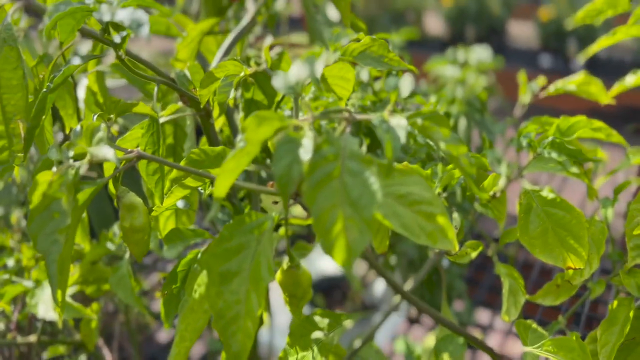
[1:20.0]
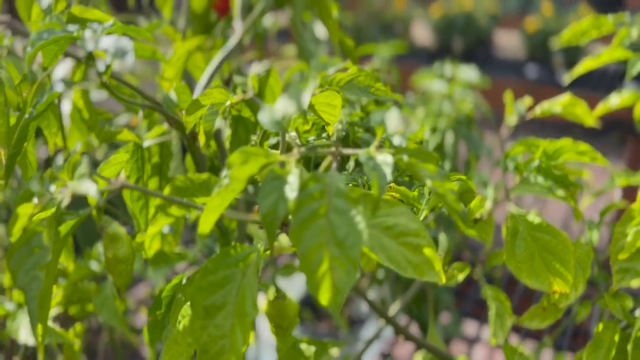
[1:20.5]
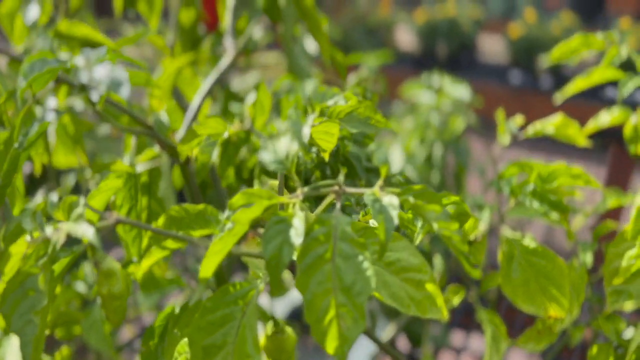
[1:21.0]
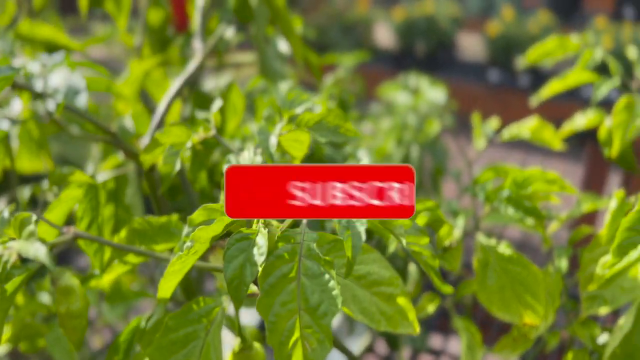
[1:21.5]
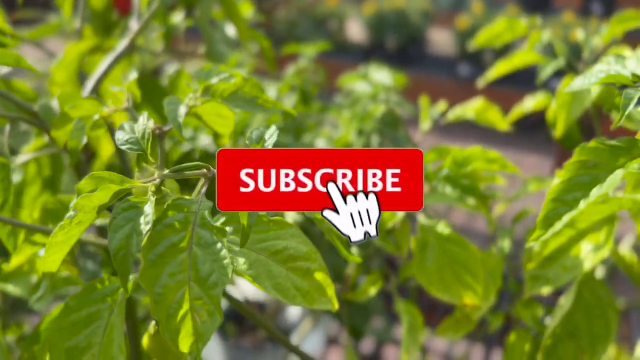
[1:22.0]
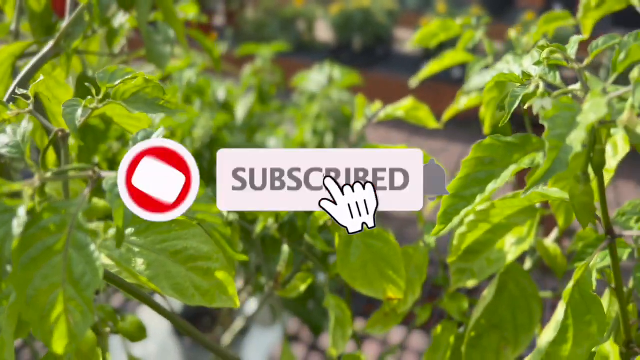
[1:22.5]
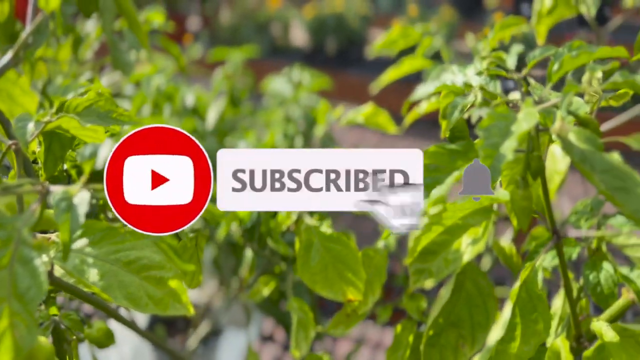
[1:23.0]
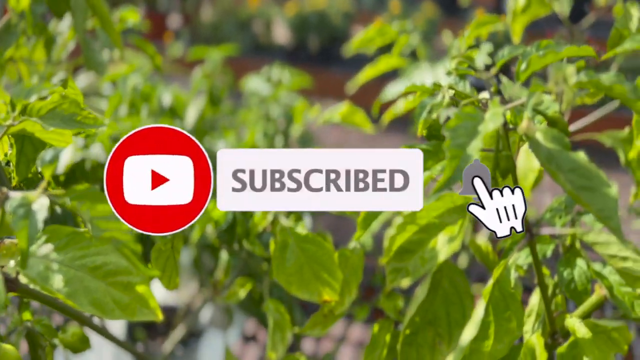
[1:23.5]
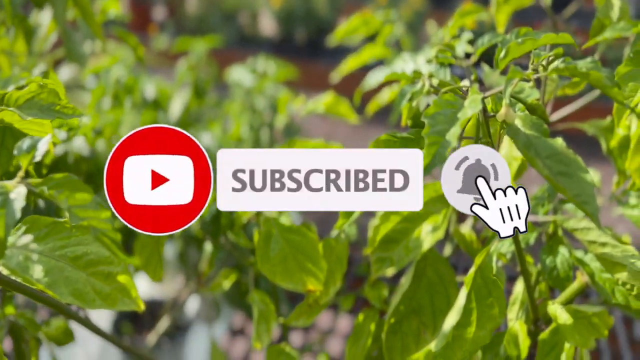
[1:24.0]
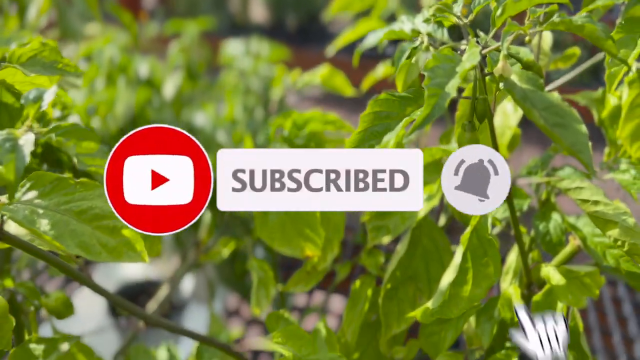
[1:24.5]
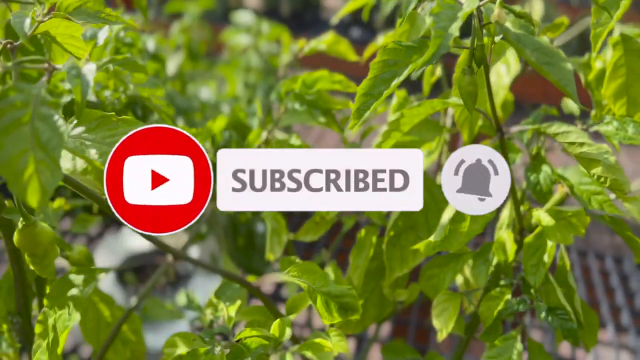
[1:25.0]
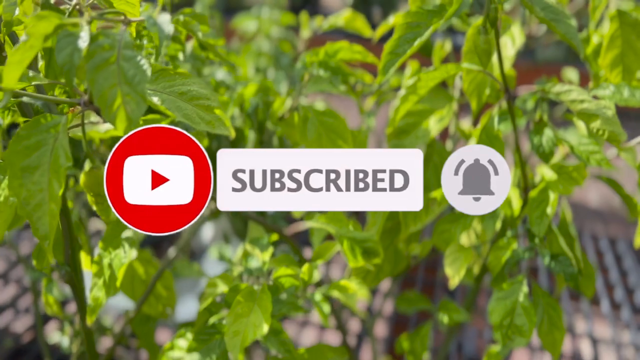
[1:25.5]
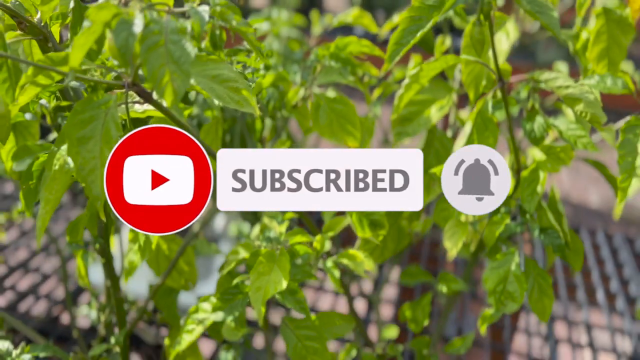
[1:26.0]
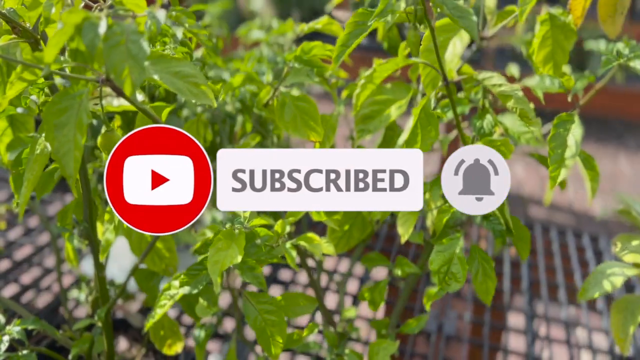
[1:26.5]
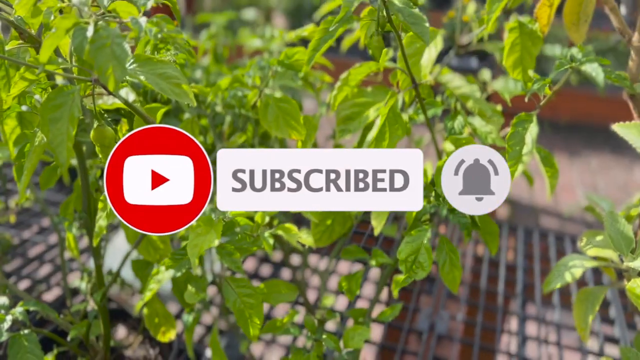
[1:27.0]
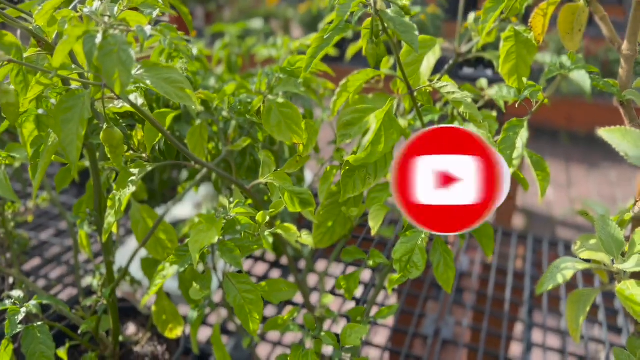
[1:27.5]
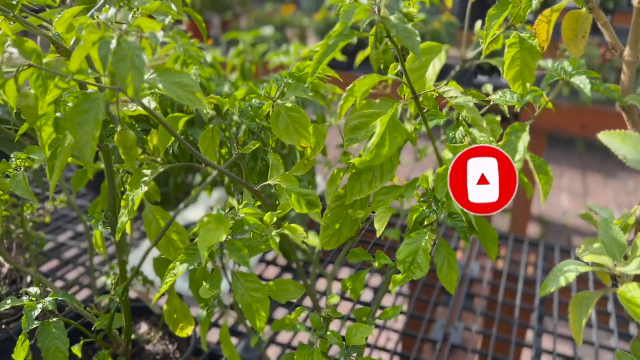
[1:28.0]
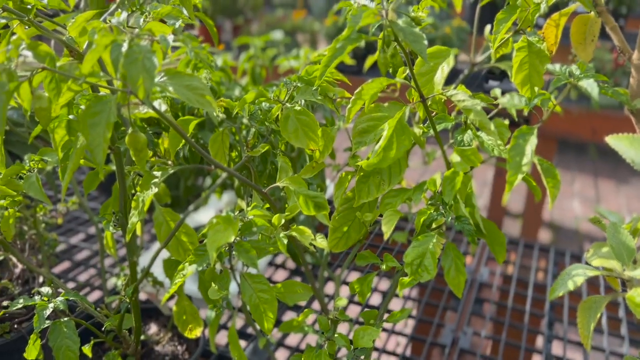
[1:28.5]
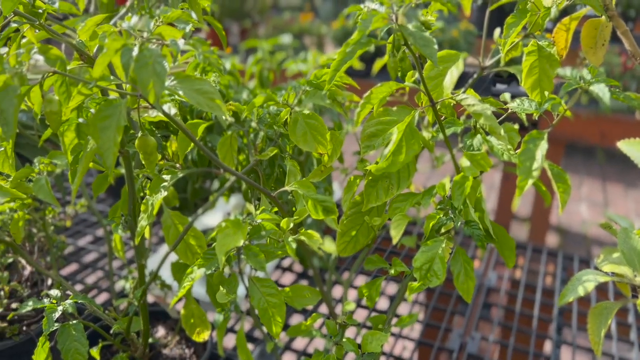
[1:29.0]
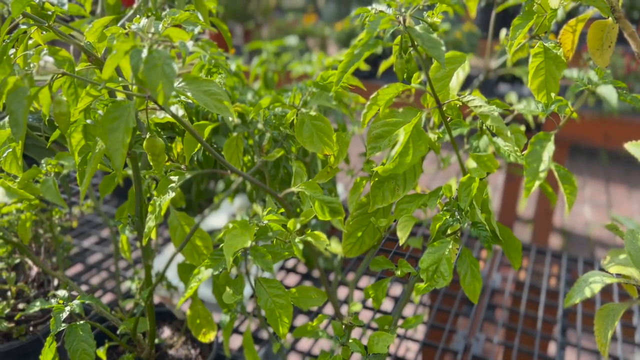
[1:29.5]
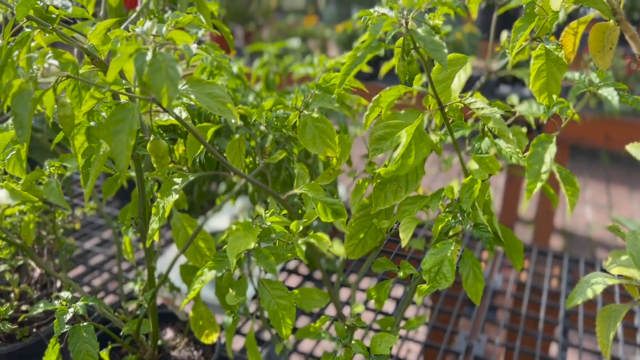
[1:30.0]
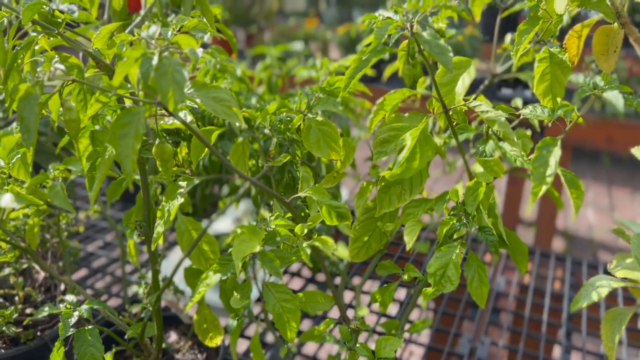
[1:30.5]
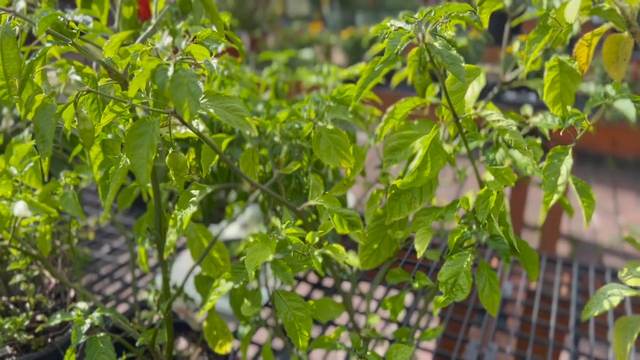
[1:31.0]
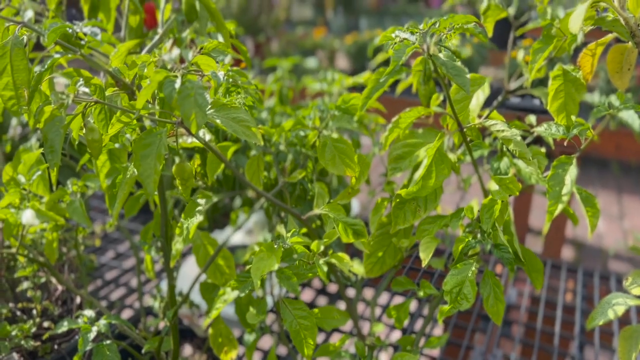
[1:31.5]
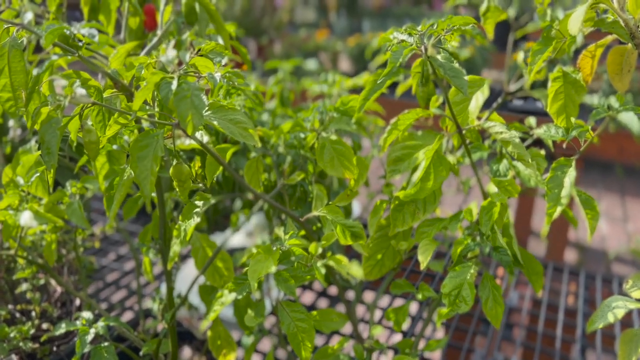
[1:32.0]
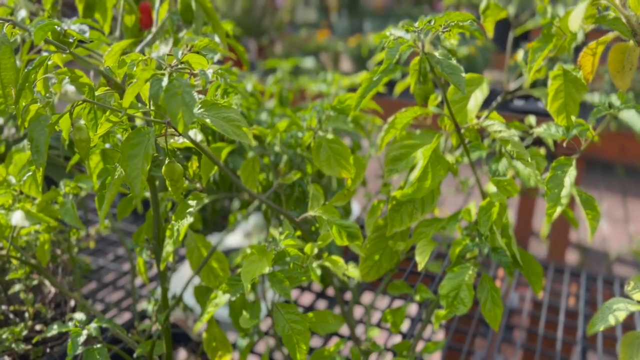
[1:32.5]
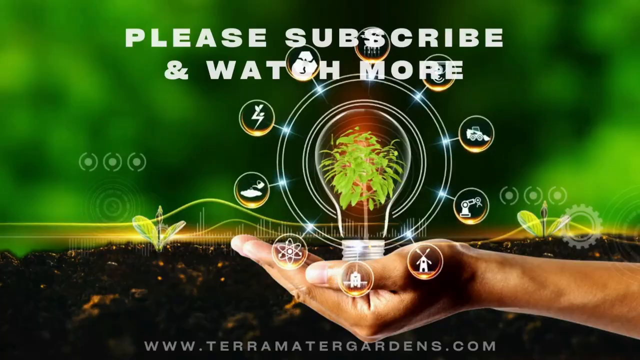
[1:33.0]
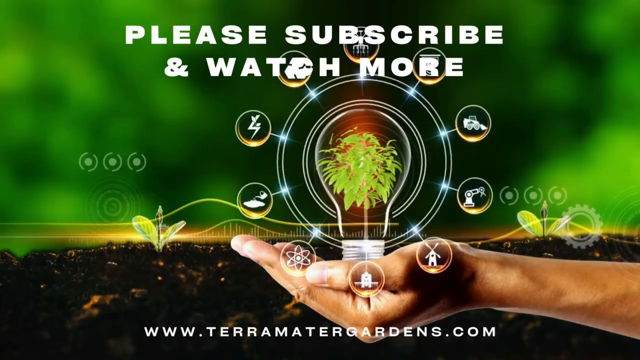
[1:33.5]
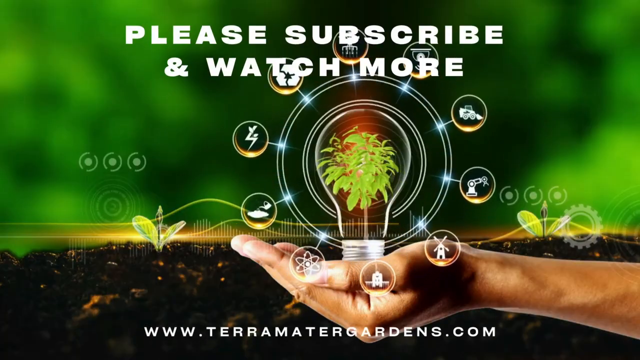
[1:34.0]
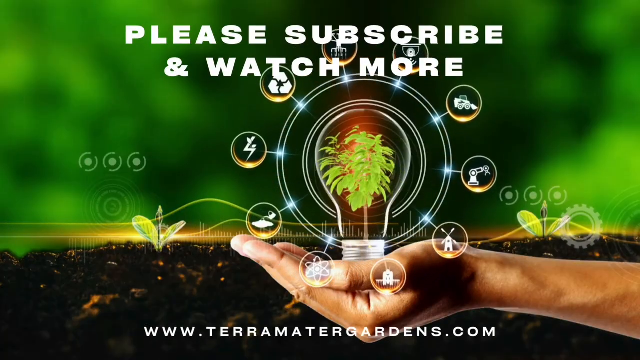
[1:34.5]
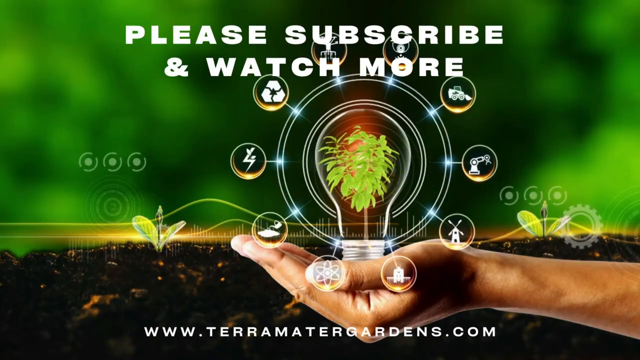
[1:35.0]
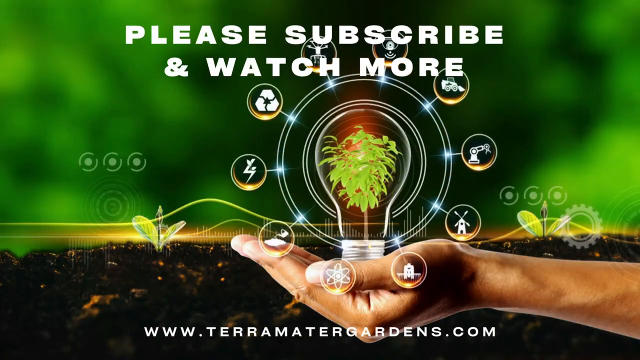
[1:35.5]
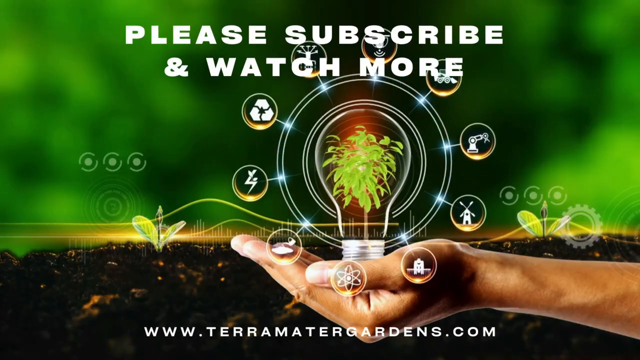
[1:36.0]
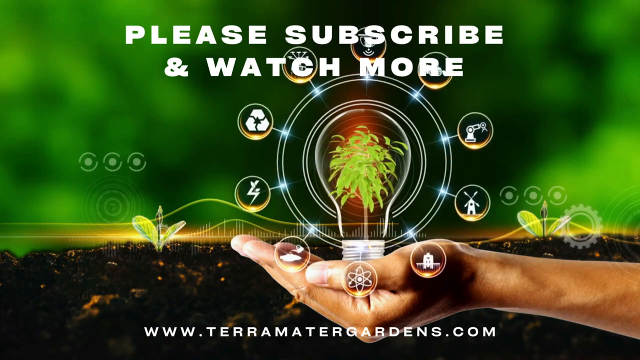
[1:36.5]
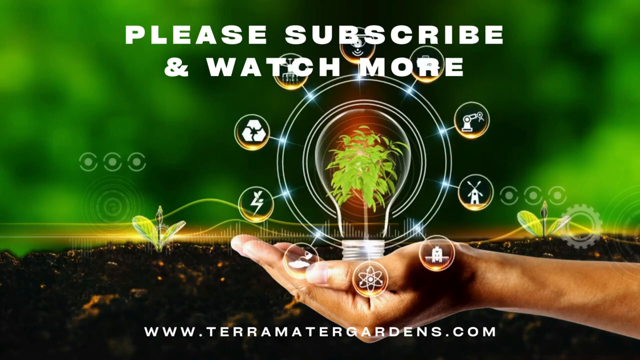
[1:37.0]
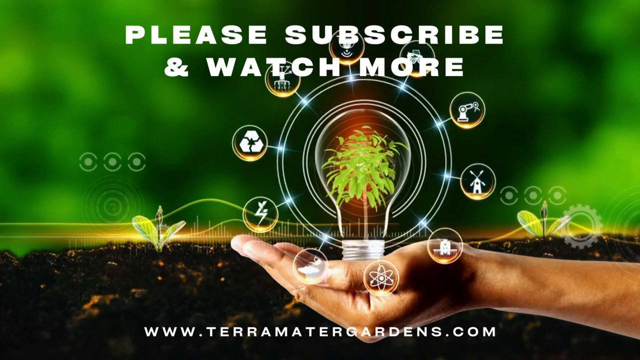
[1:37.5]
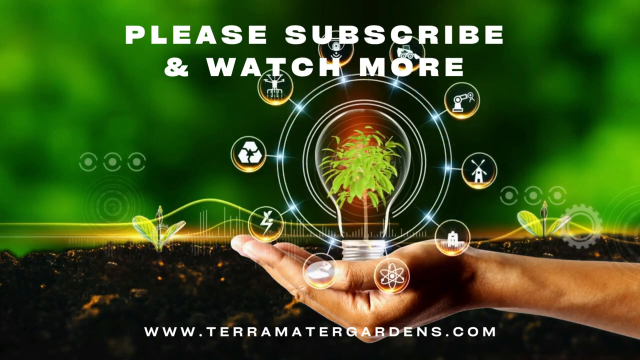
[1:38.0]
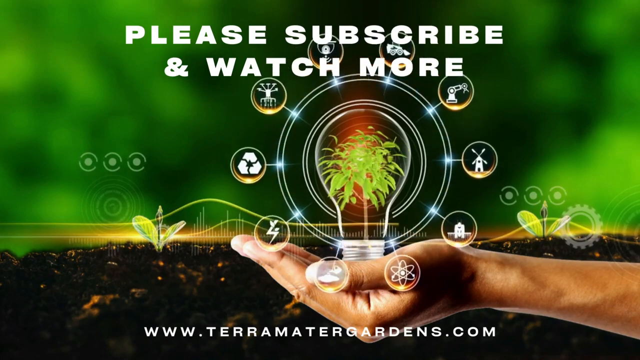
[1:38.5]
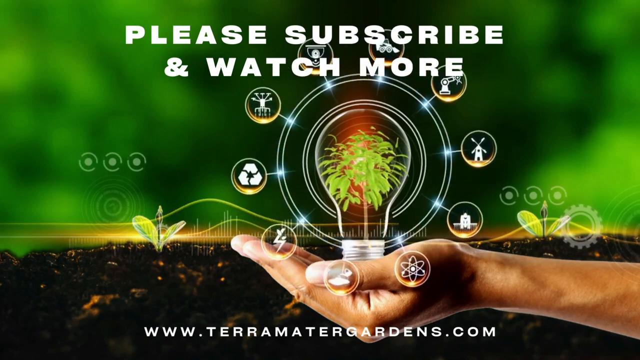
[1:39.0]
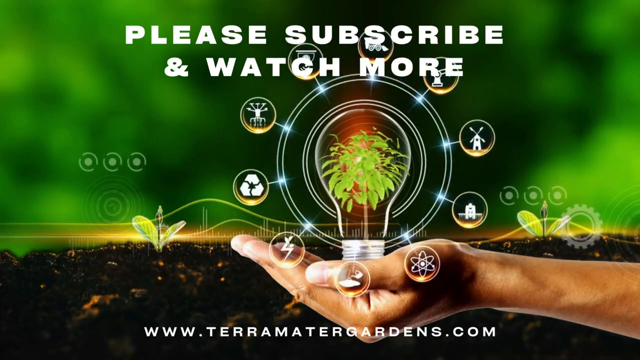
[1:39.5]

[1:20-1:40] An up-close view of a plant shows very green leaves, with what looks to be a gray grate at the bottom of the frame. Some of the leaves in the upper right-hand corner appear yellowish. A text box pops up with the word "subscribe" in red; next to it is a circle with a play button, and on the other side is a white circle with the image of a bell. The video pans up and then cuts to a different screen showing a hand cupping a light bulb with a green plant inside it. The light bulb has a circle around it, and 10 smaller circles come off of it, each containing an image.